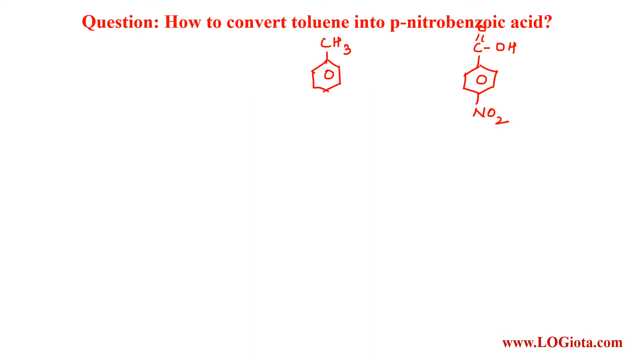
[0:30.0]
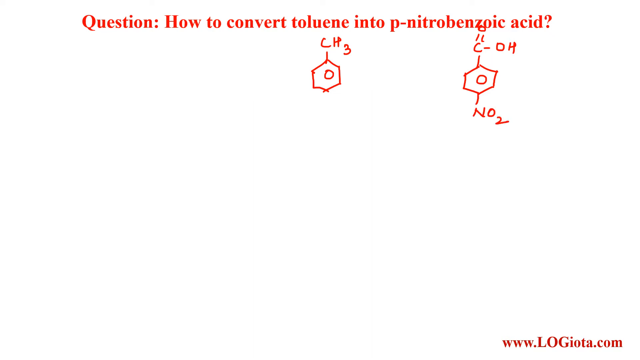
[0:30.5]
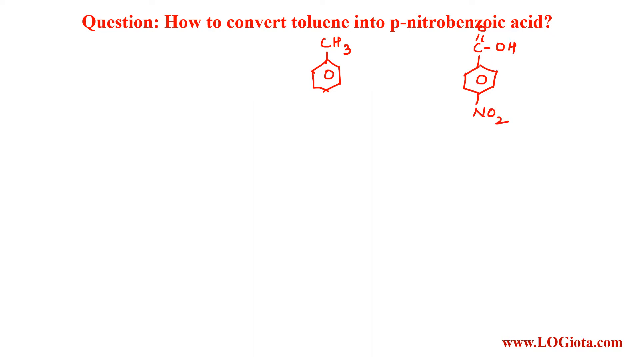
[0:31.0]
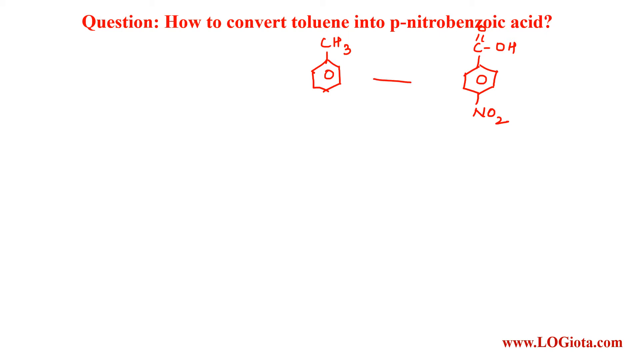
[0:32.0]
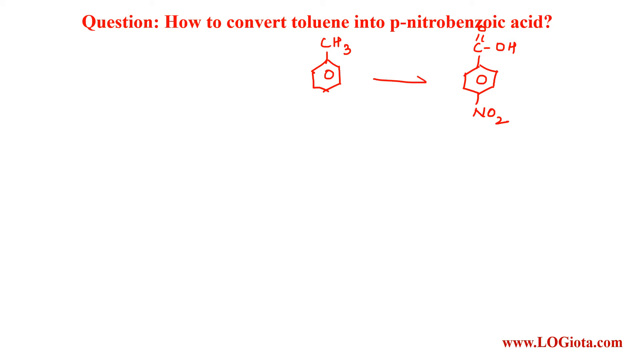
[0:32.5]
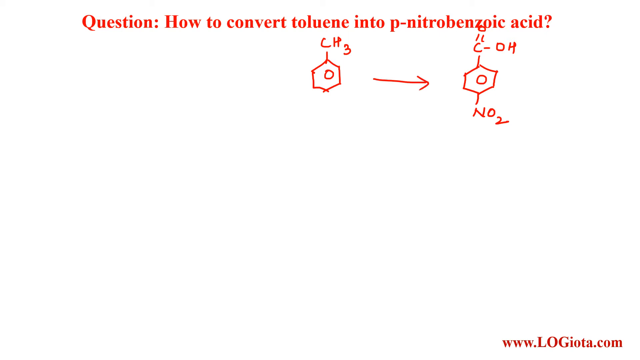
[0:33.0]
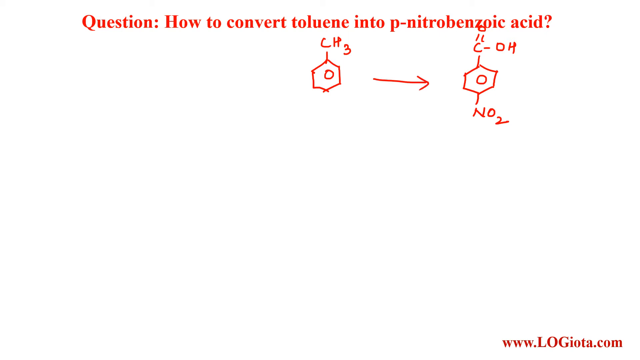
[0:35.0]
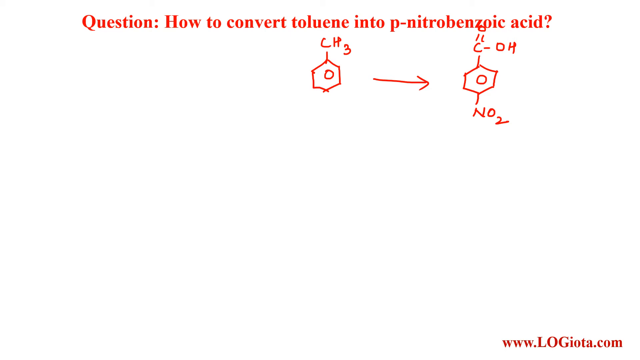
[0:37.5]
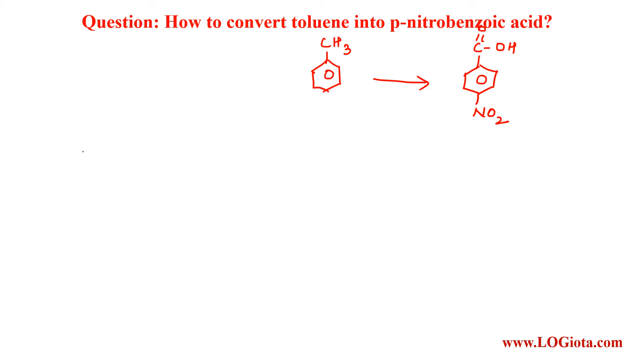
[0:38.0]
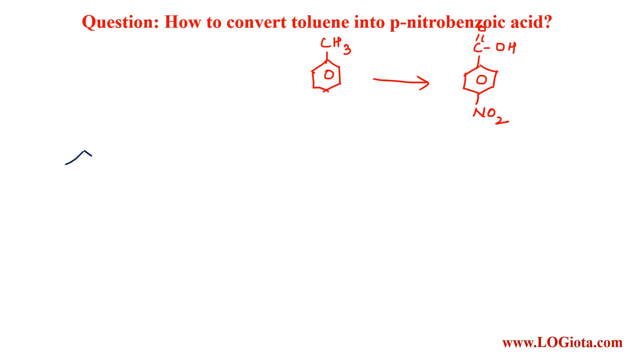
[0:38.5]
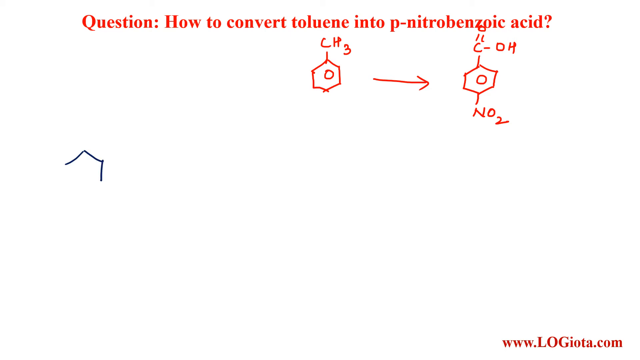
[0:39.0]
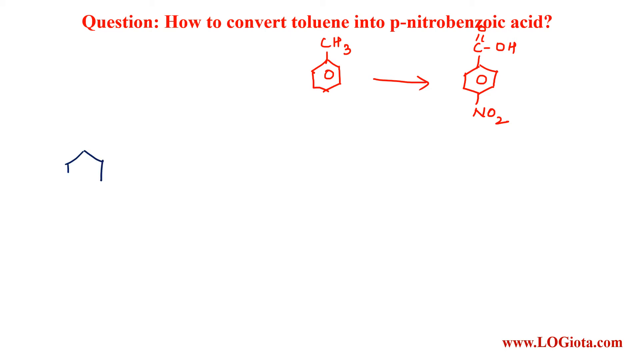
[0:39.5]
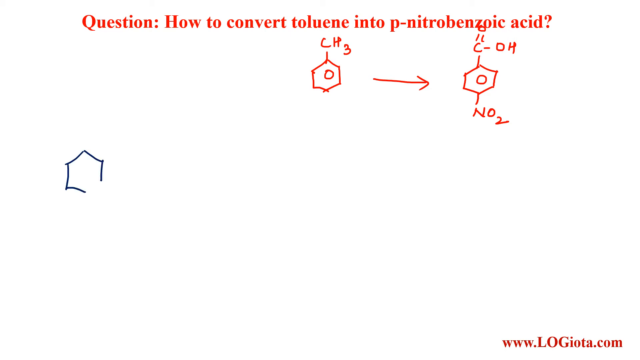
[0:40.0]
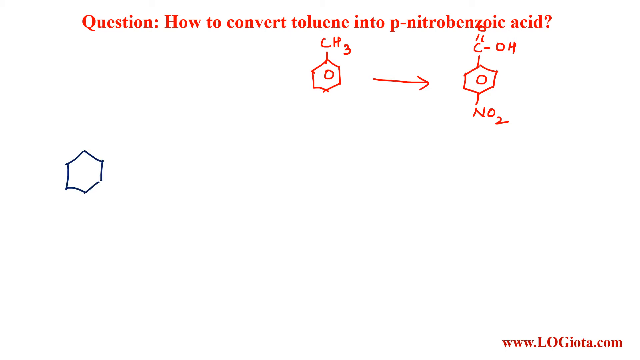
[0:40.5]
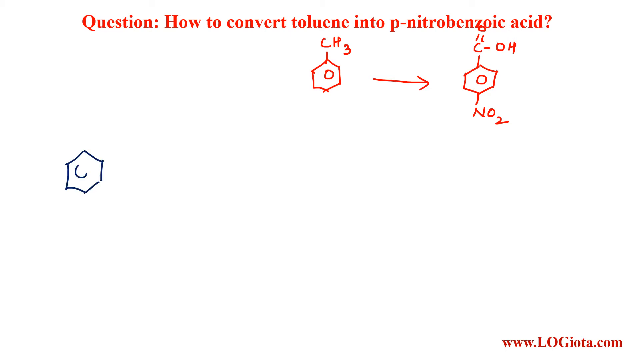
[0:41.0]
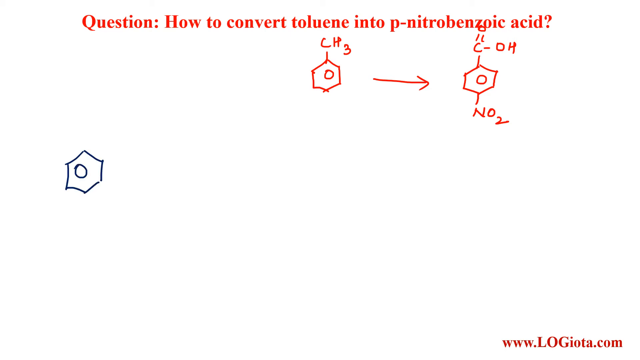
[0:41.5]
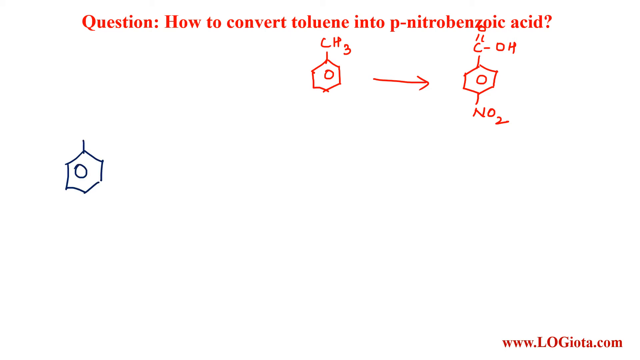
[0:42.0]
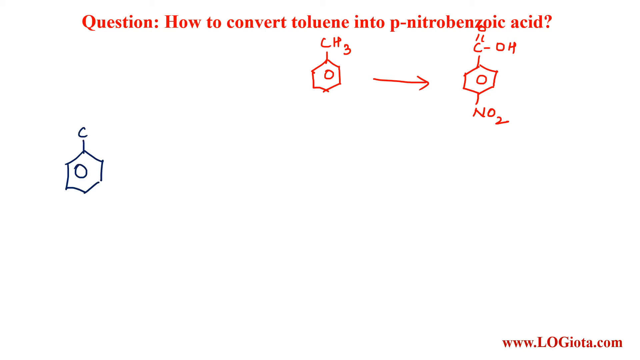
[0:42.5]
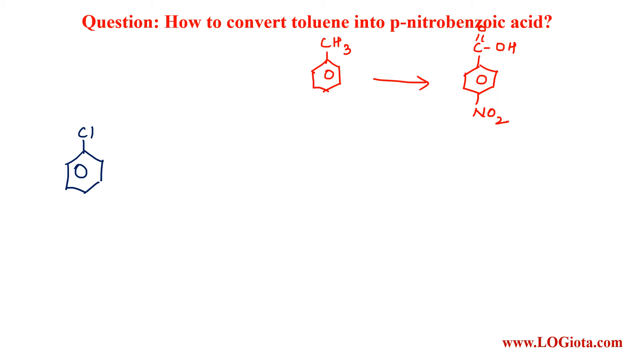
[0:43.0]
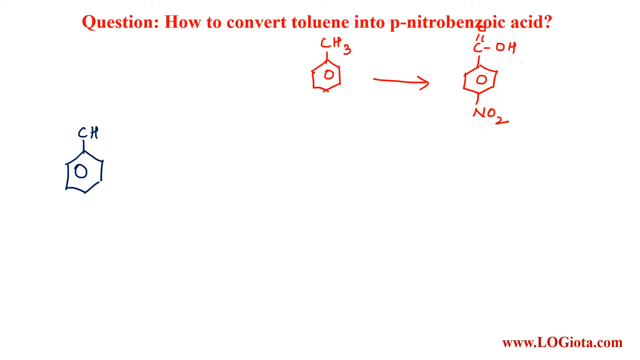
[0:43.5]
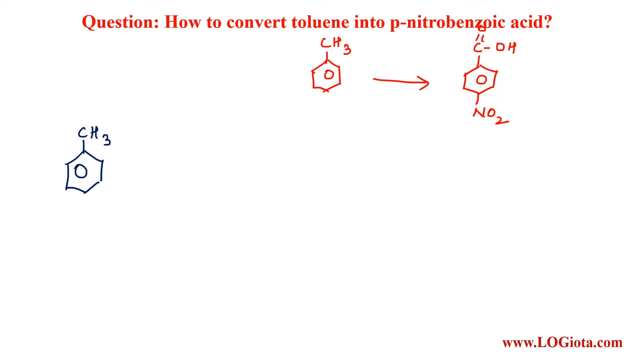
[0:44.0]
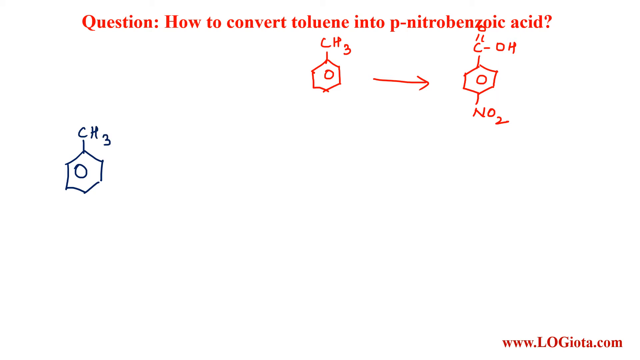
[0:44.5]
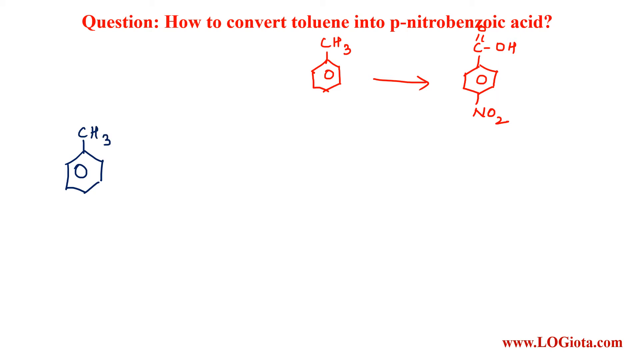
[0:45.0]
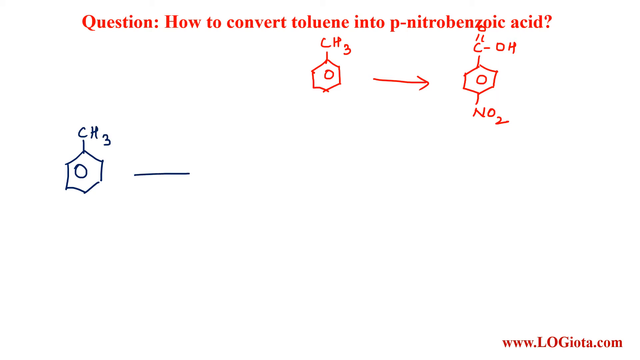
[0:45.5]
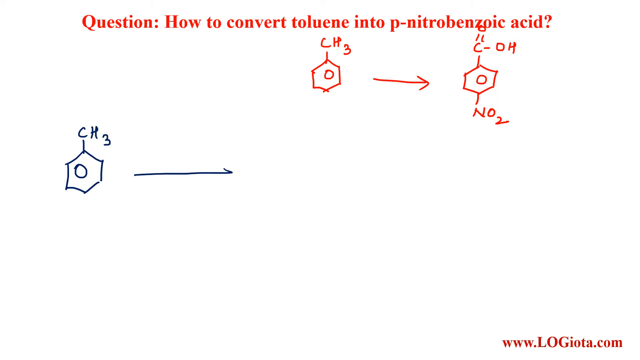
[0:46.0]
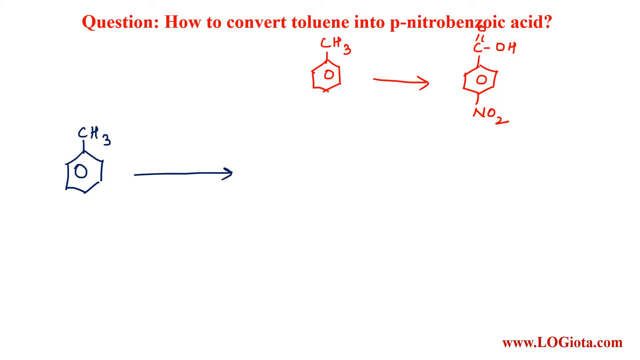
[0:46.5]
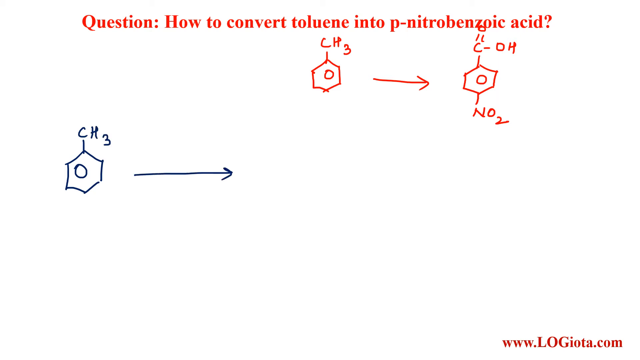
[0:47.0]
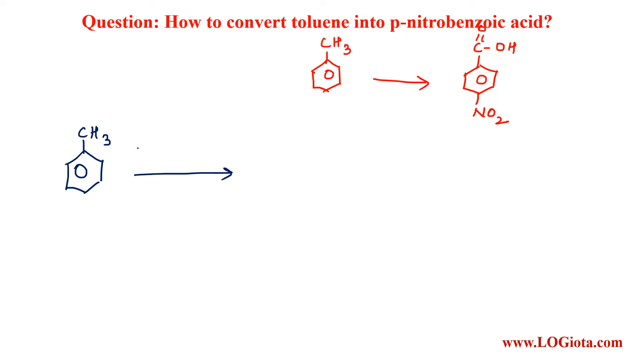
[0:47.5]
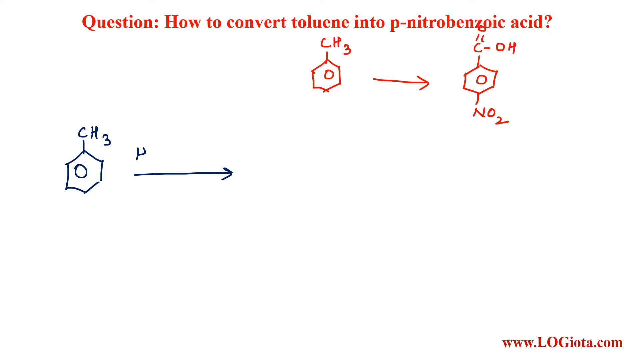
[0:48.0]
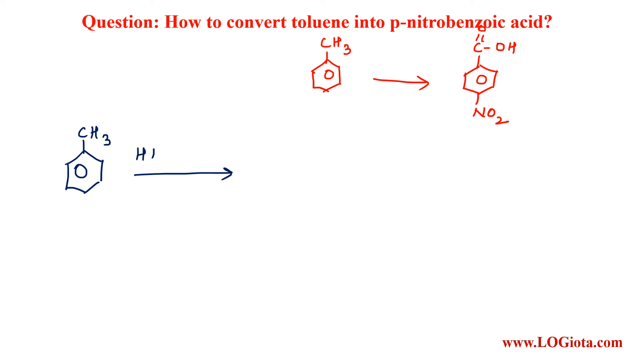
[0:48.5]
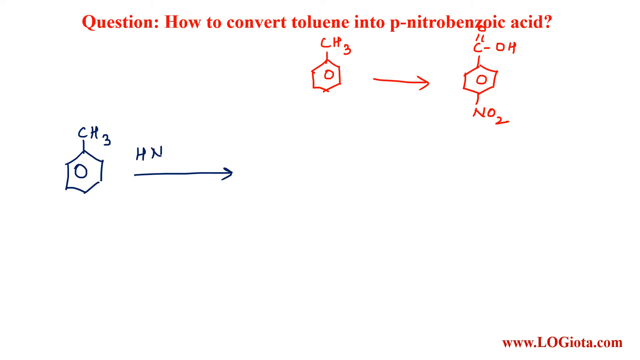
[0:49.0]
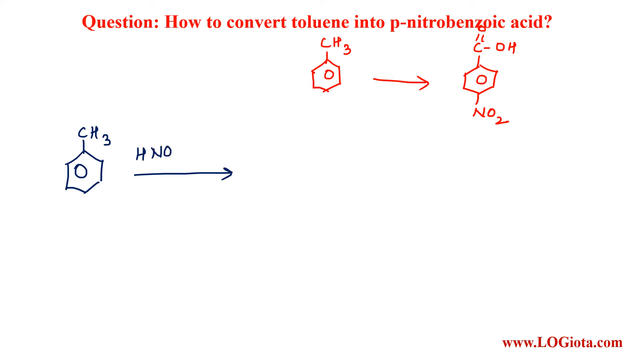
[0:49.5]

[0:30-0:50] The instructor continues drawing the right-hand structure, writing underneath it what is apparently "NO2". These first drawings, apparently the toluene, are in a shade of orange that is almost red. On the left-hand side of the screen, the instructor then starts drawing in blue, writing "CH3". To its right they draw a line with an arrow pointing to the right, labeled apparently "HNO3". Then the video cuts.